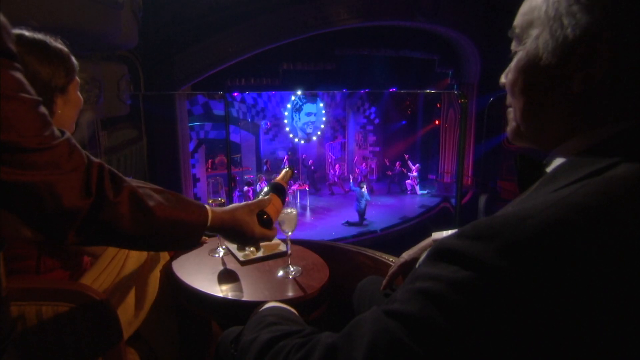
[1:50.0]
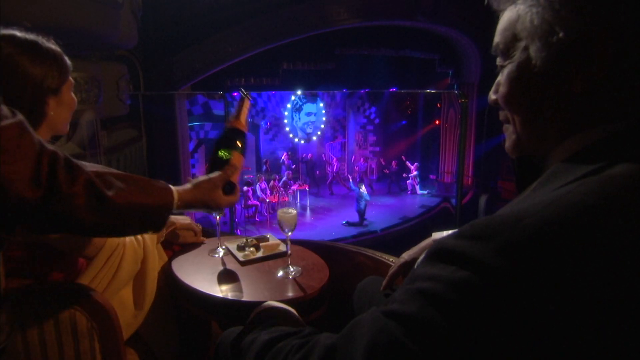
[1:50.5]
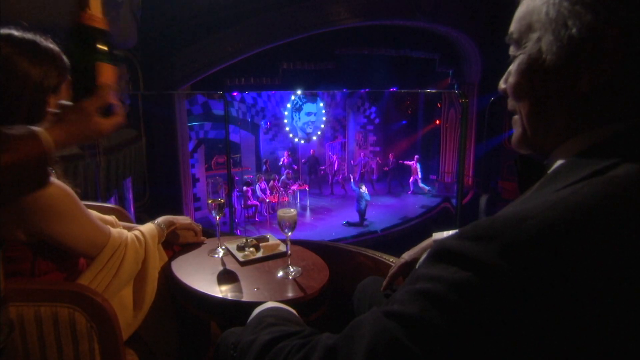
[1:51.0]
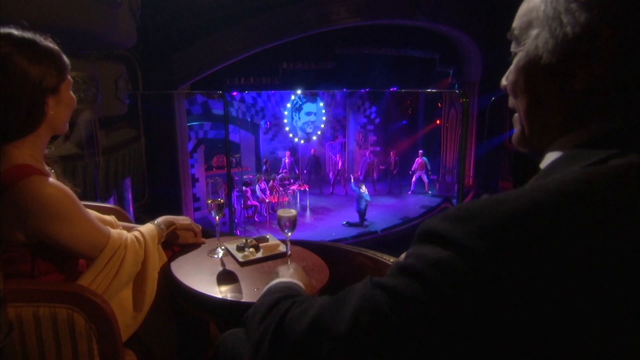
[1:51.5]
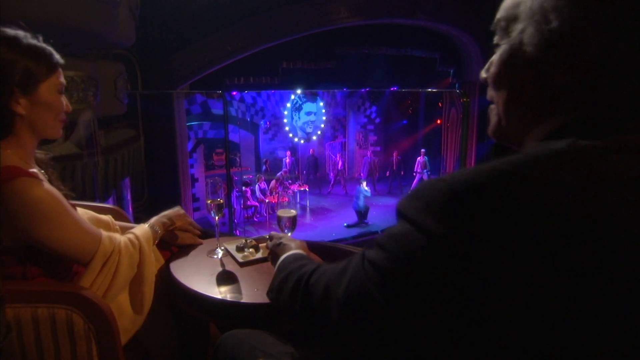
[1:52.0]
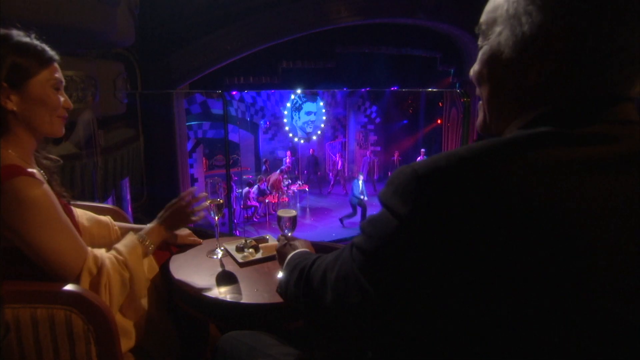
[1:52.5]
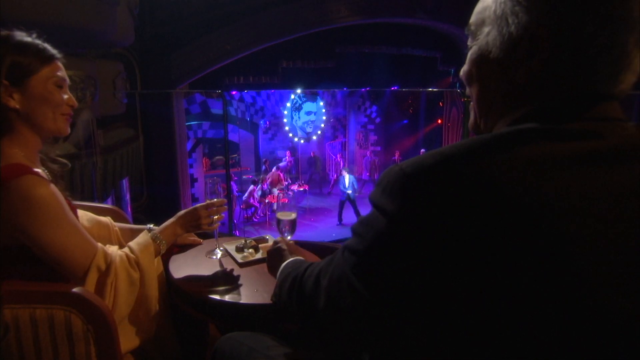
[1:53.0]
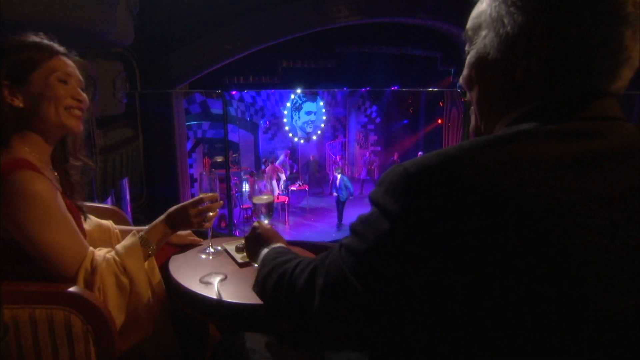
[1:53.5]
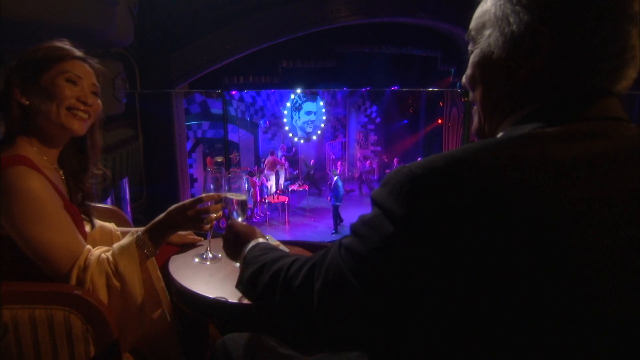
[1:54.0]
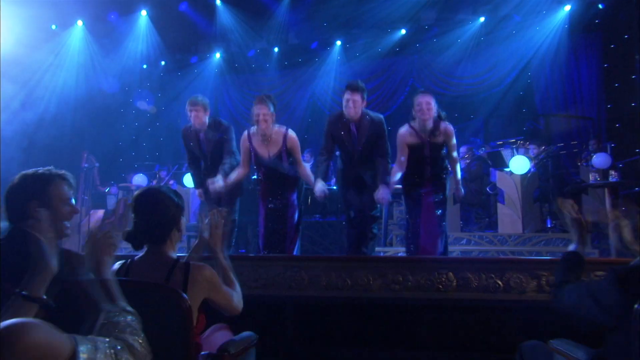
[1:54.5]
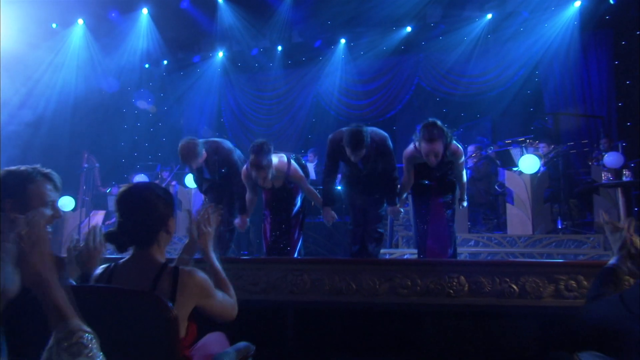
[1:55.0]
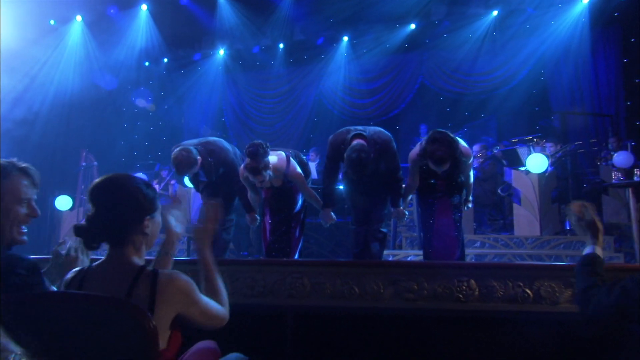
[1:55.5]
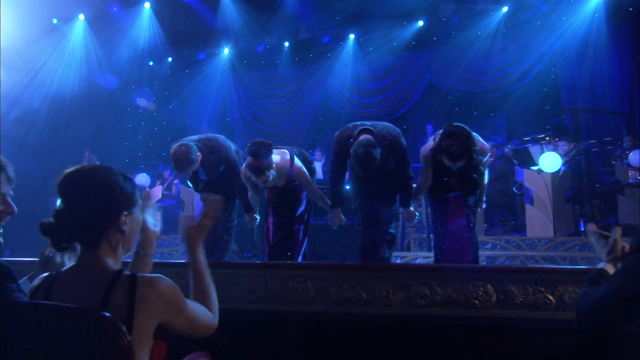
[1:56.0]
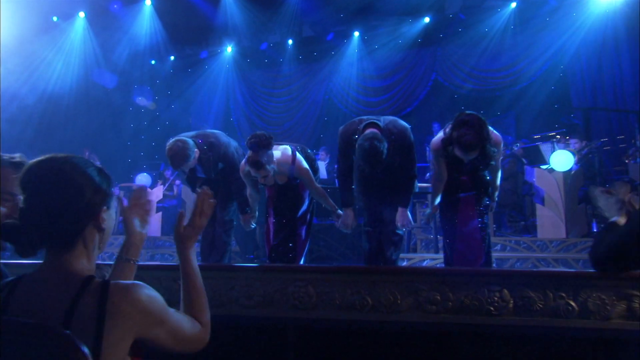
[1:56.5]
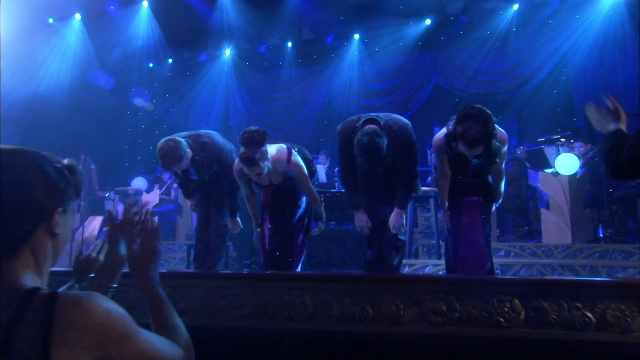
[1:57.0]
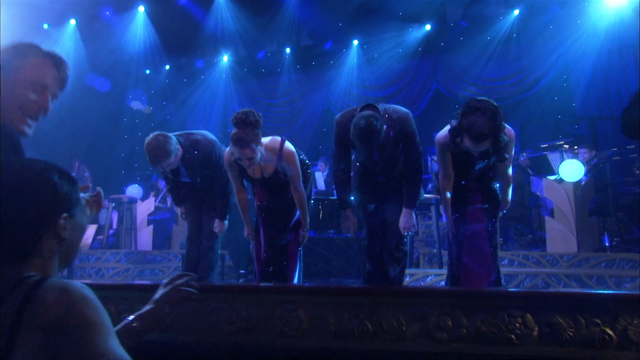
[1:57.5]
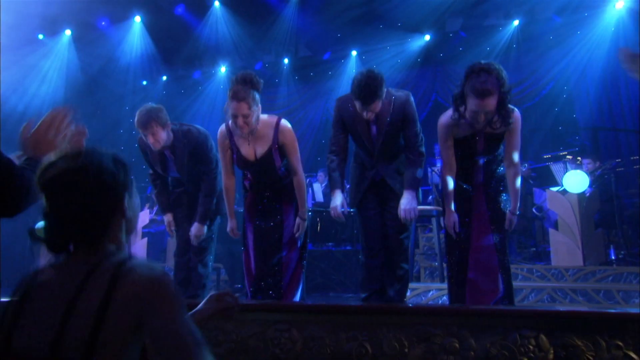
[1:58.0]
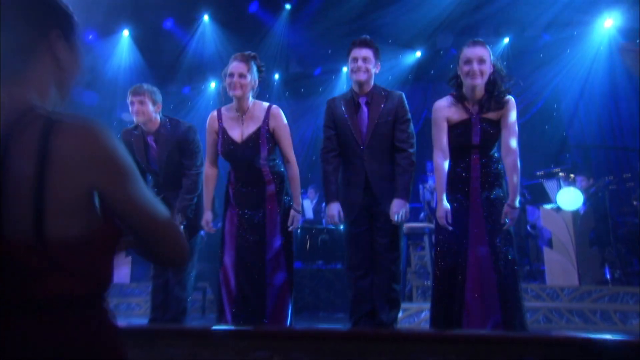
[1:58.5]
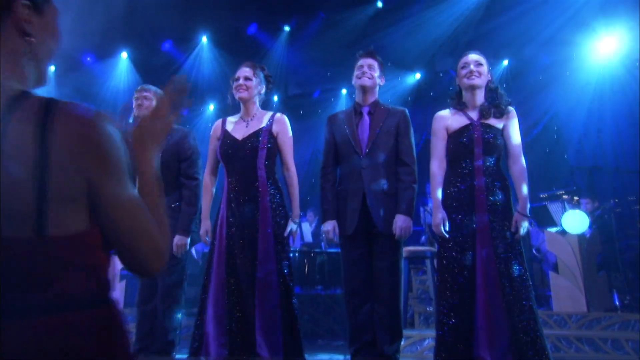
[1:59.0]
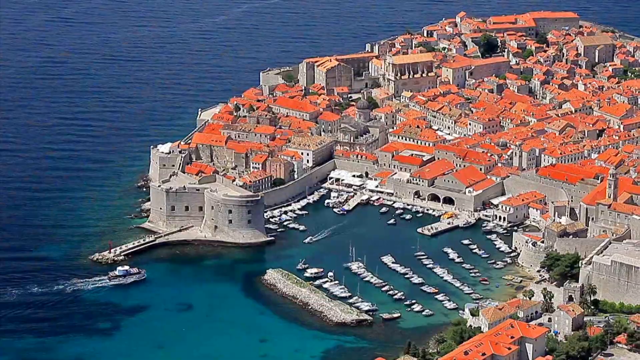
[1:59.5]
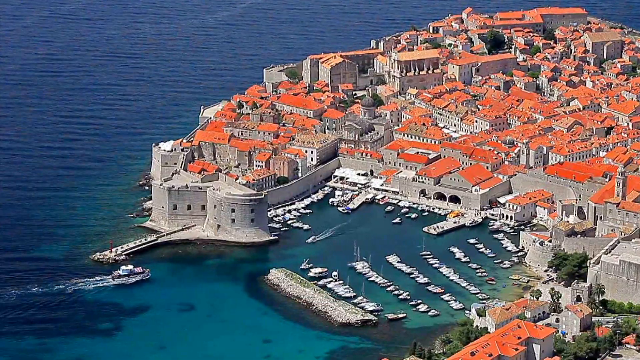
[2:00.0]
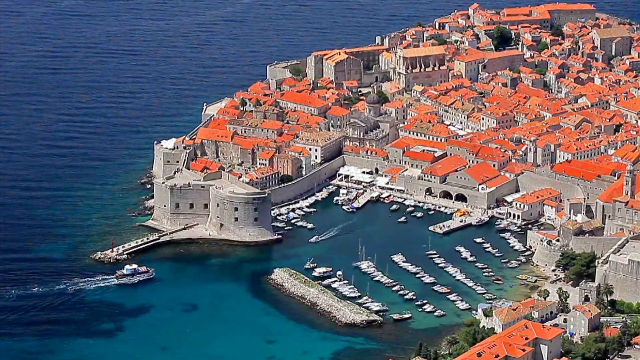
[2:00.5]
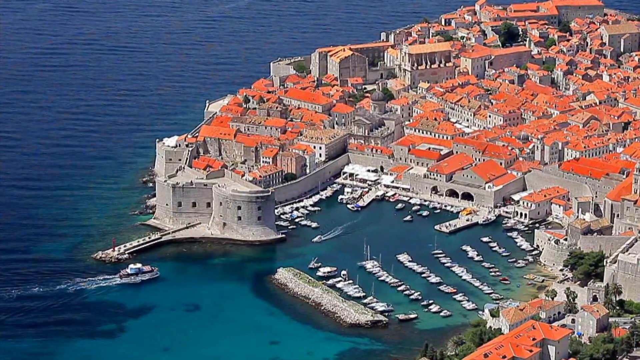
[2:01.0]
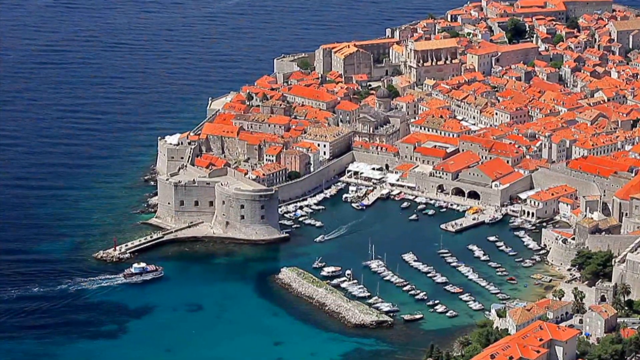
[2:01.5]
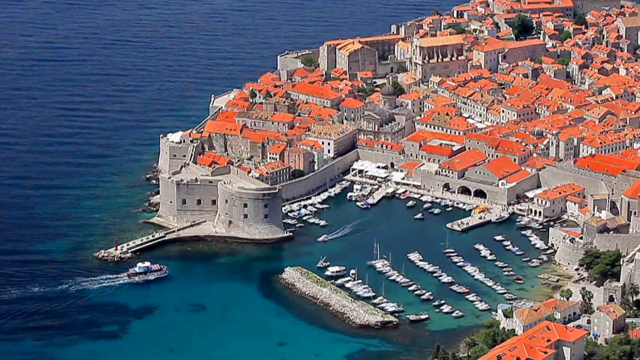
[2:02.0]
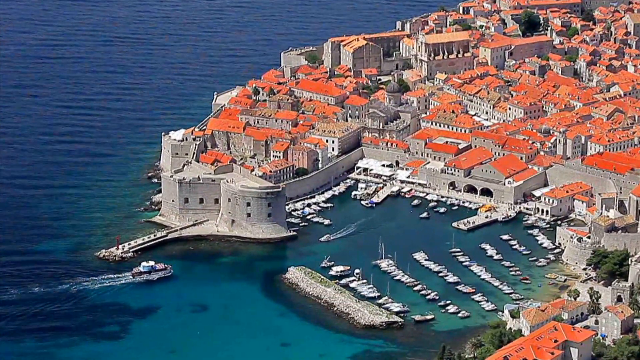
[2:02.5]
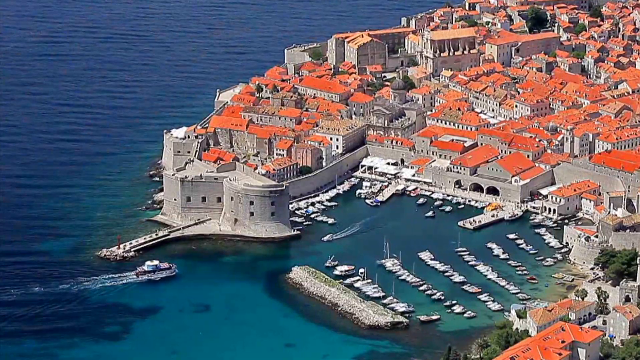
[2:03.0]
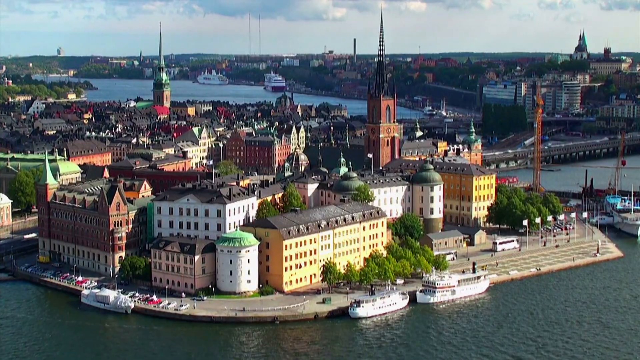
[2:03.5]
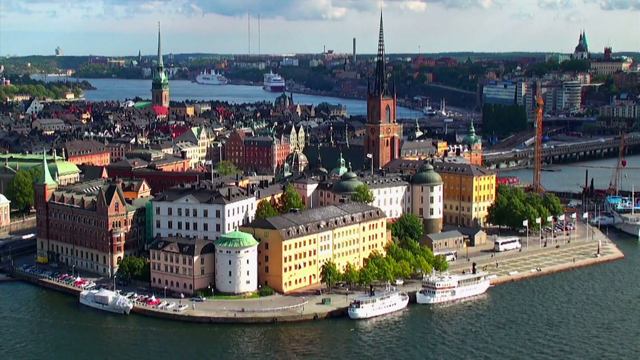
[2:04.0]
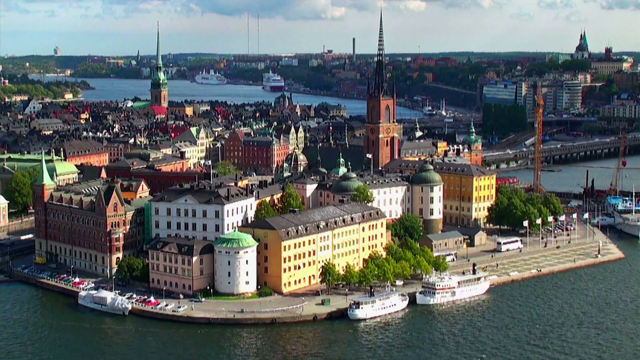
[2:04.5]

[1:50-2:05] On a stage at the front of the room, two men and two women perform; the women wear long black dresses and the men long-sleeve shirts. They sing while the shot focuses on a man and a woman in the audience watching the show. The view moves down to show other audience members as the singers take a bow and the audience claps. The scene then changes to very quick shots of what looks to be a Mediterranean city and then what looks to be a Scandinavian city. The Mediterranean city is on the ocean, with beige buildings with orange rooftops and many boats at a dock beside the buildings. The Scandinavian city, also right on the water, has variously colored buildings with different colored rooftops and what looks to be a church with a large steeple in its center.